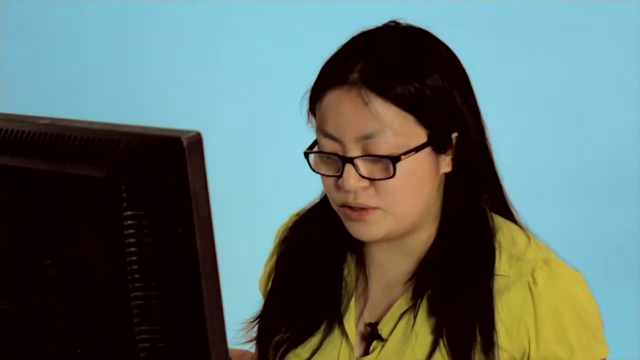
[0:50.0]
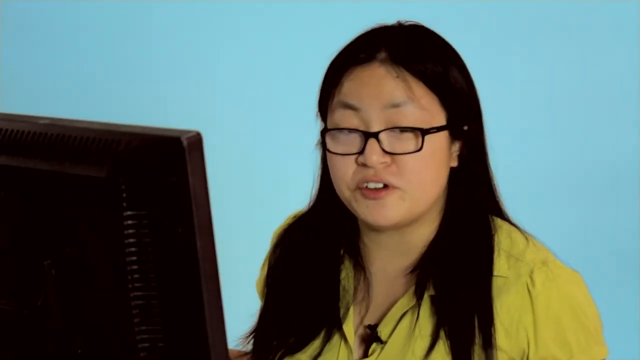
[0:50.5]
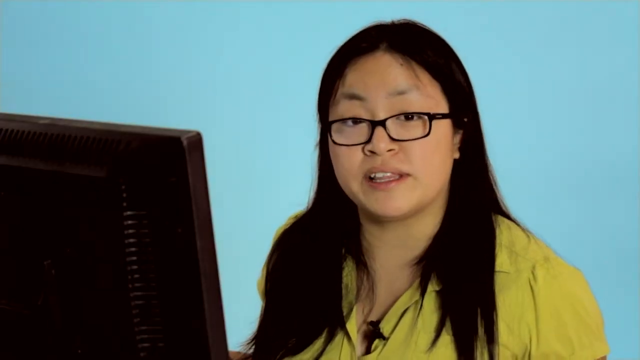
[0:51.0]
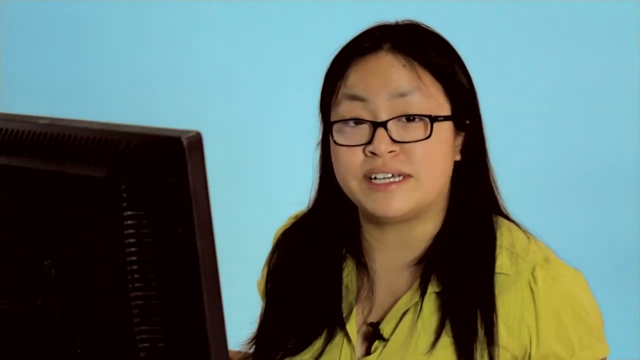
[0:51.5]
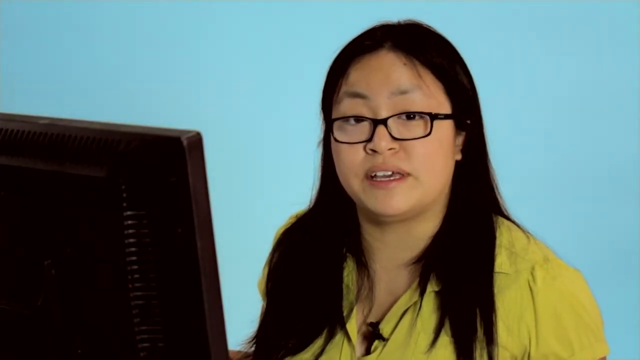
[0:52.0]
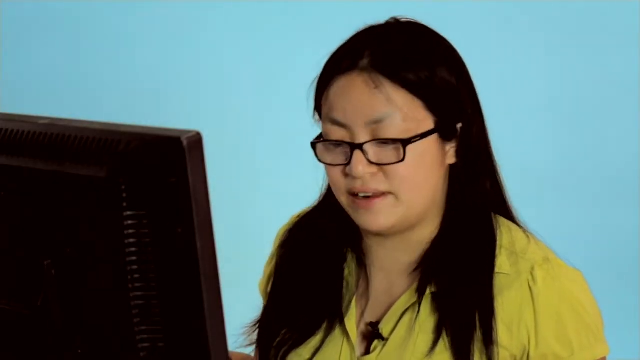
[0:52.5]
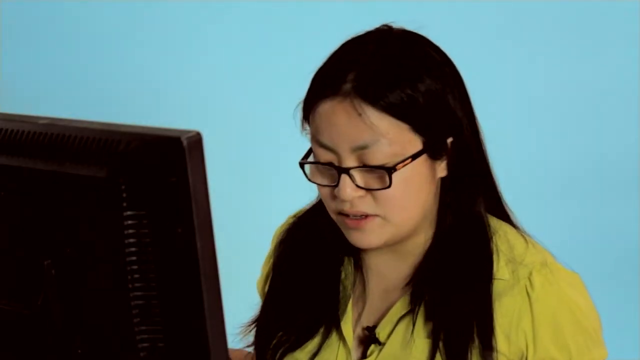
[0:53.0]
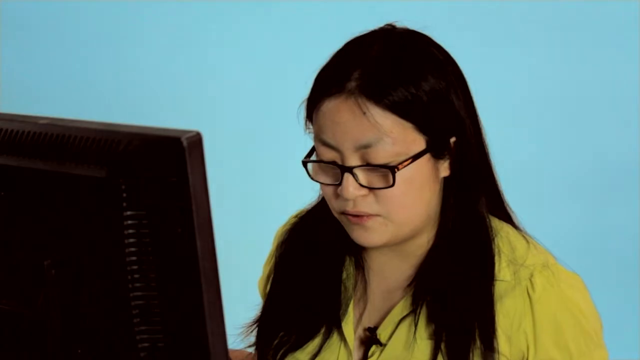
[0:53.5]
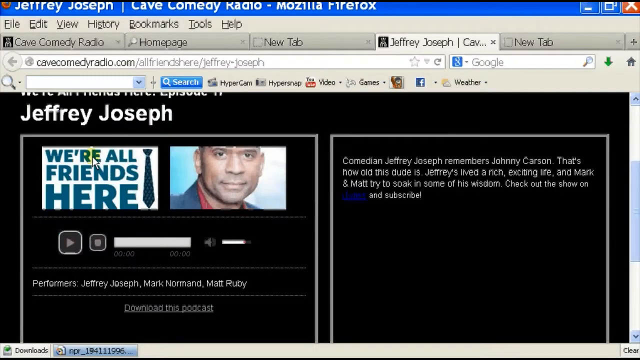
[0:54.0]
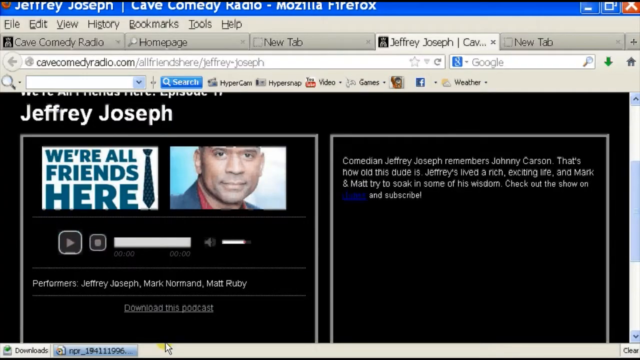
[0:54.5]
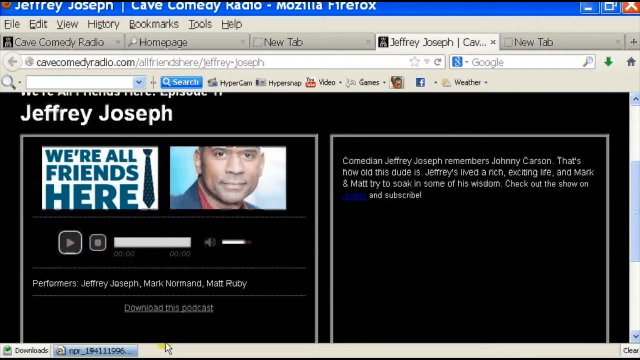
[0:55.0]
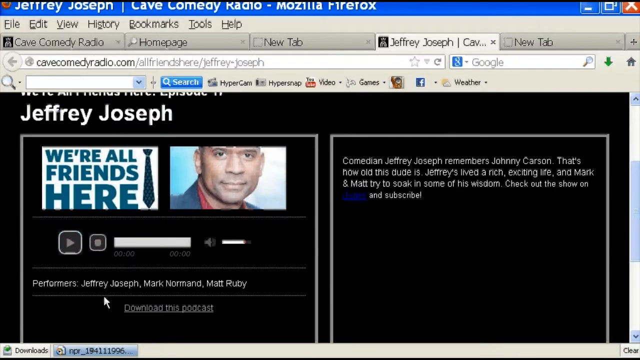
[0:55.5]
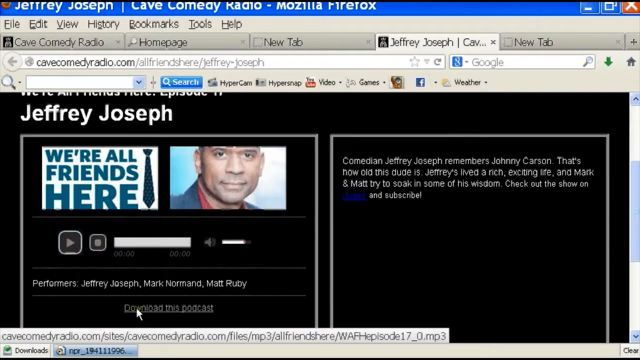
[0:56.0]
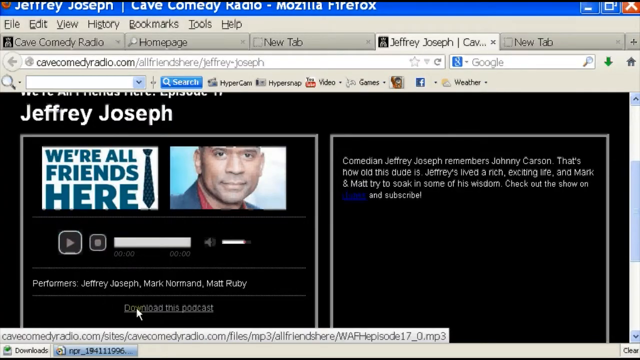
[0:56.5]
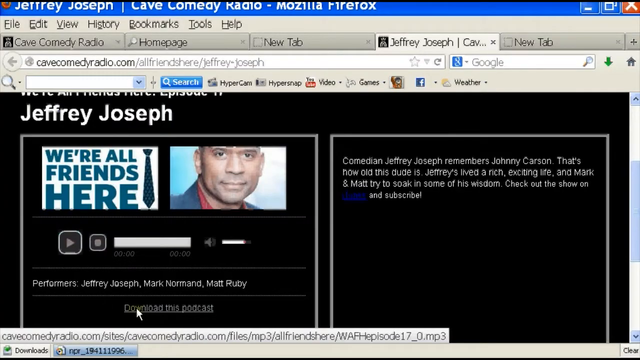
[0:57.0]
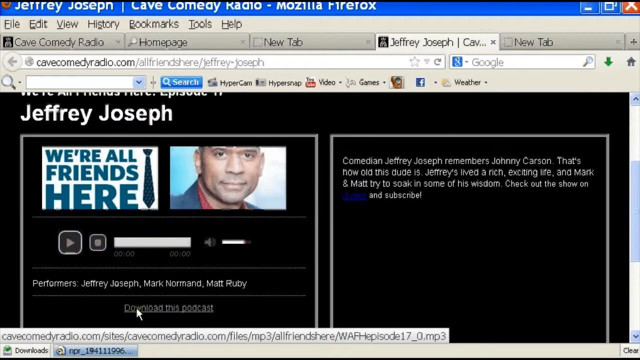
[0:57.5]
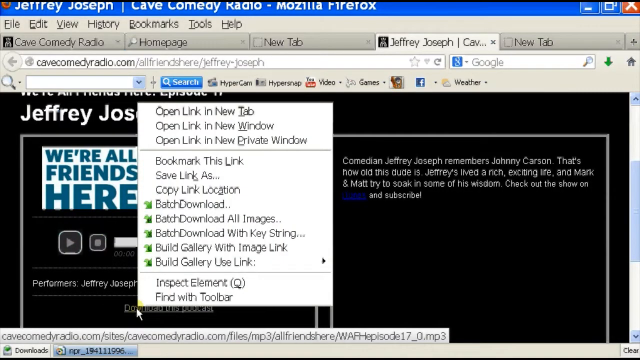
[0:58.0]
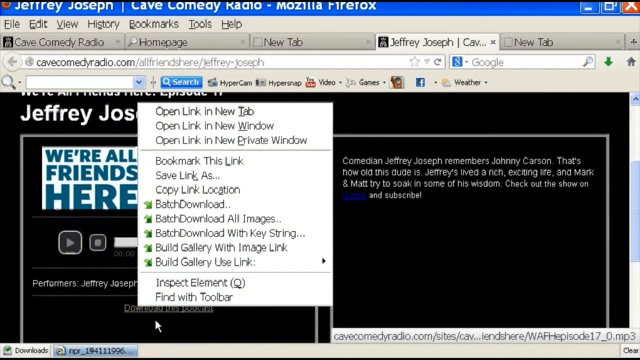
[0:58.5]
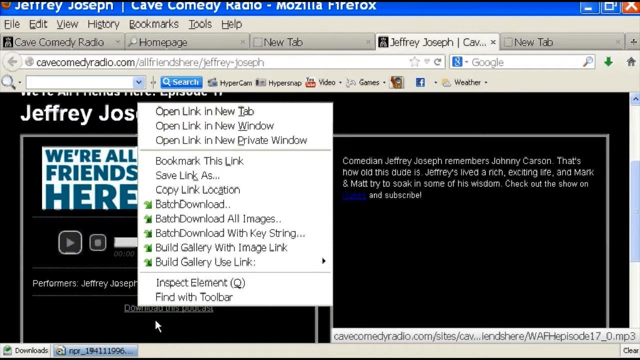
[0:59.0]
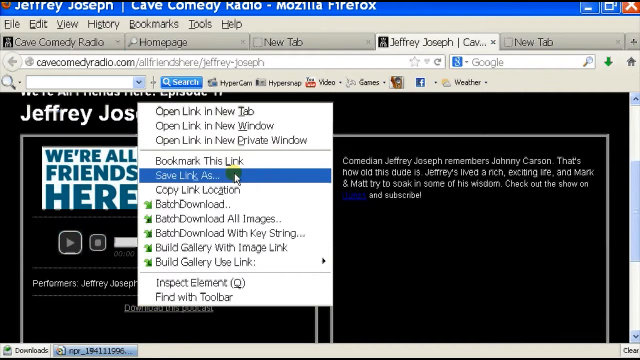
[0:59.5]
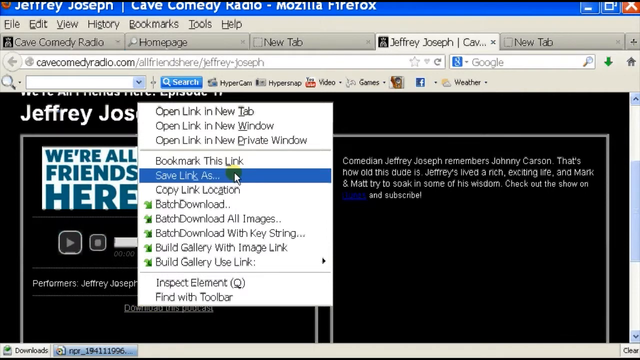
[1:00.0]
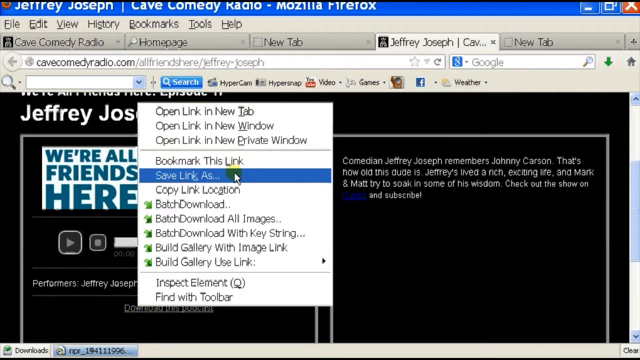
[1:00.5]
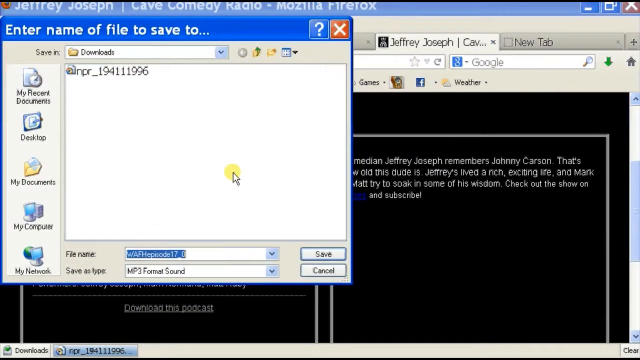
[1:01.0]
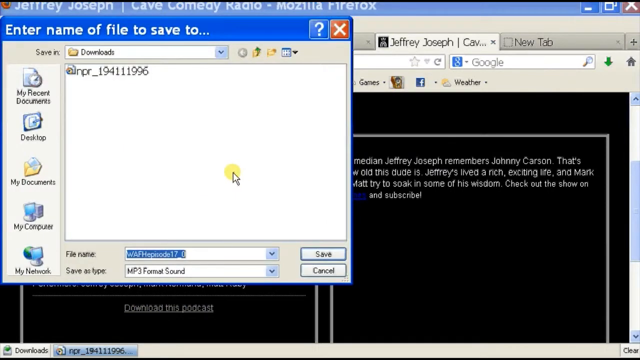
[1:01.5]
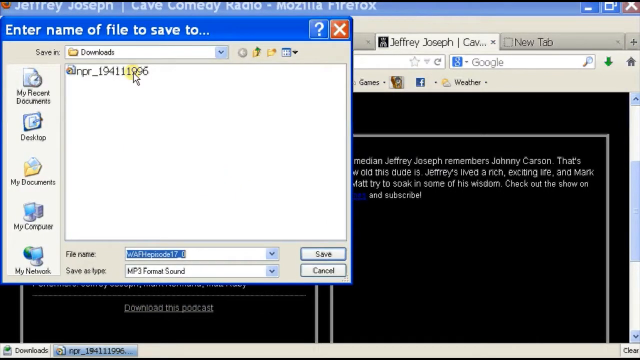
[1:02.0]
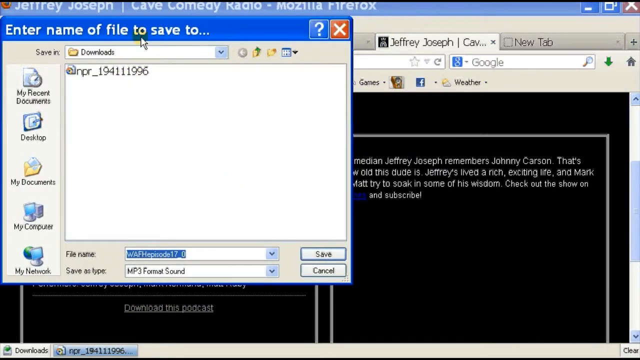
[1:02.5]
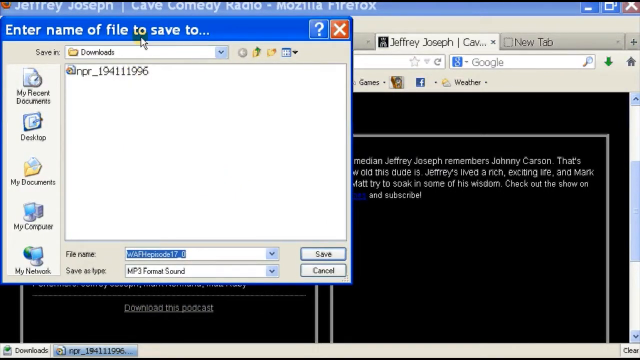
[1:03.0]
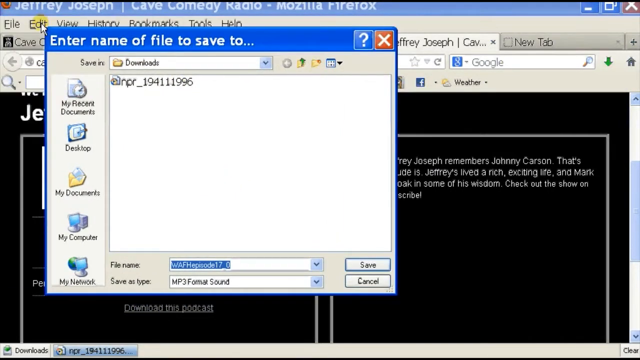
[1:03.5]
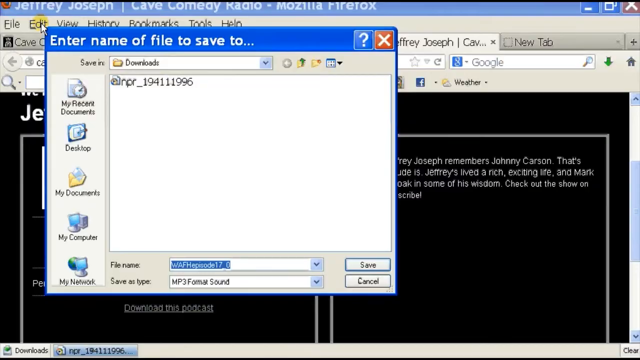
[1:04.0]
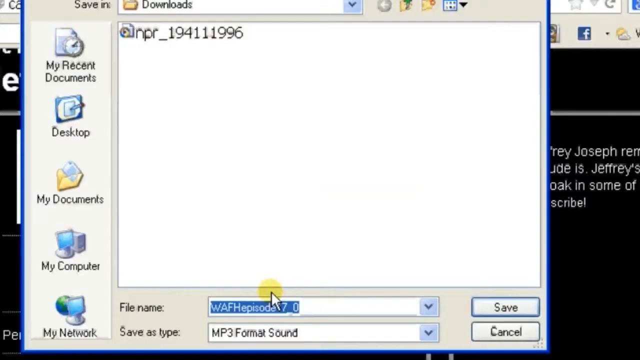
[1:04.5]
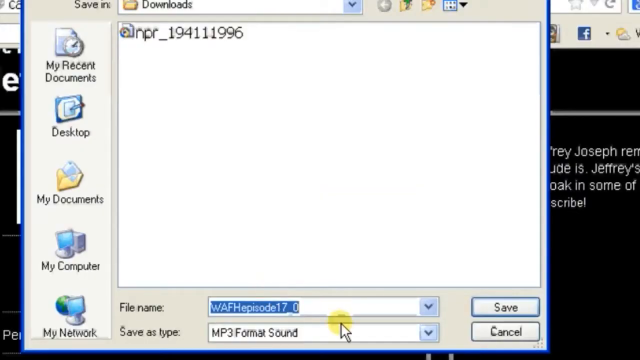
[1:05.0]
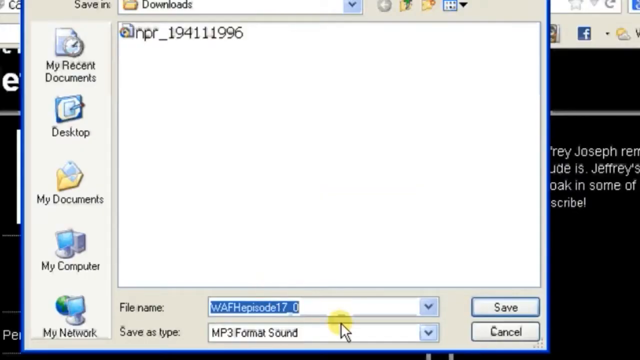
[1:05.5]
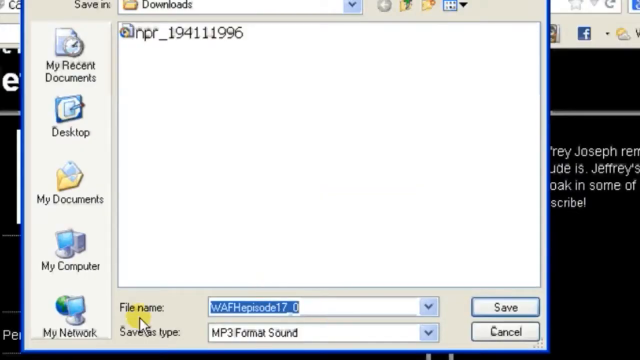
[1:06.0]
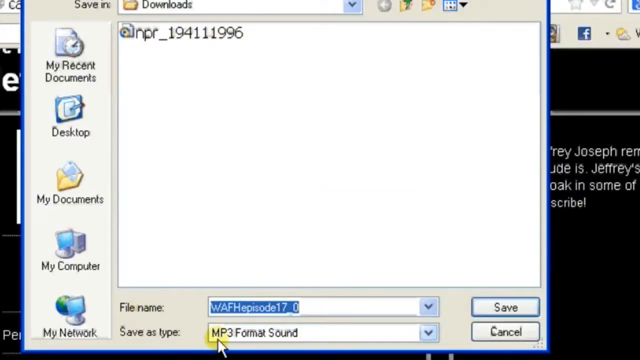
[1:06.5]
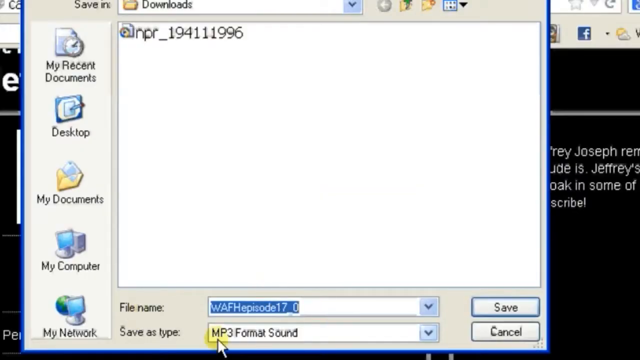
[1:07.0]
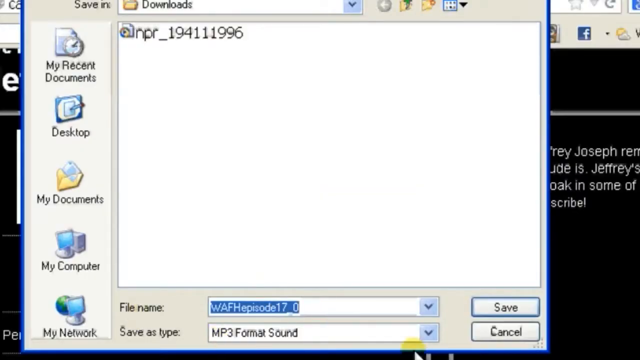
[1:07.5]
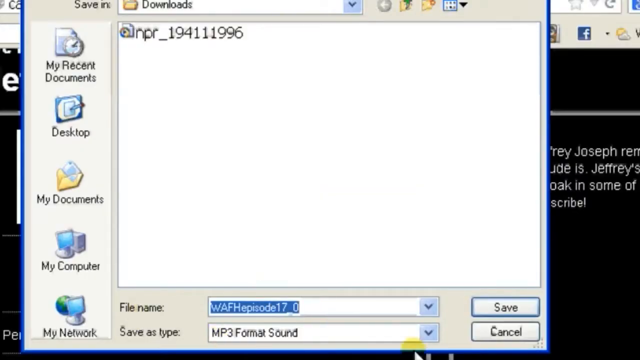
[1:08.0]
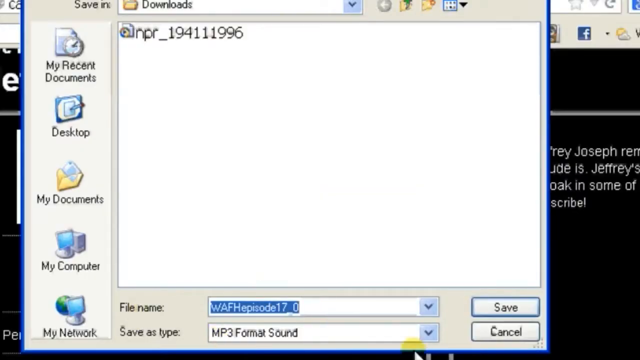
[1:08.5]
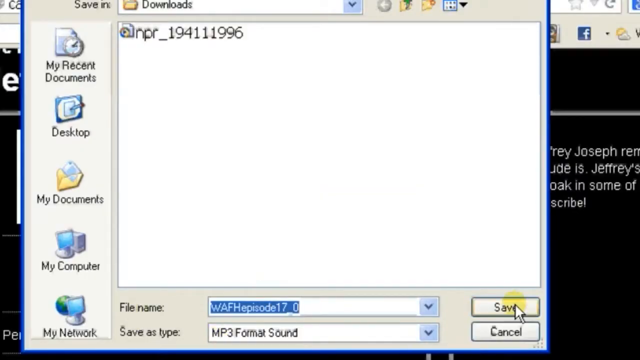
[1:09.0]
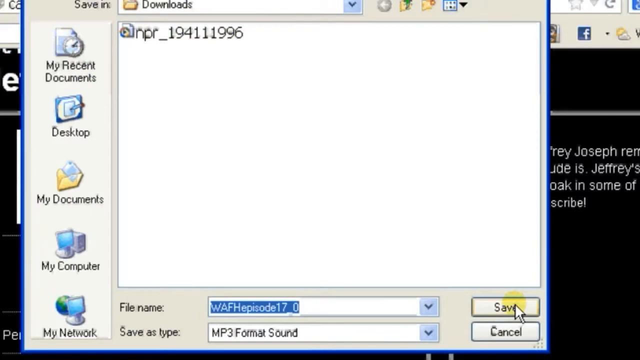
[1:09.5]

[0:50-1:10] The video is back on the web developer, a woman with long black hair, black glasses and a green shirt, sitting in front of a computer and seemingly explaining what she has been doing. She is now on a different website belonging to Jeffrey Joseph, who appears to be a comedian; it is maybe his podcast. She right-clicks on download the podcast, bringing up a menu of options including "link in new tab", "link in new window", "link in new private window", "bookmark this link", "save link as", "copy link location", "batch download", "build gallery with image link" and inspect element. She clicks "save link as", and a pop-up box appears with the option to save the file in her downloads or somewhere else and to rename it. She appears to leave it as the default and clicks save.